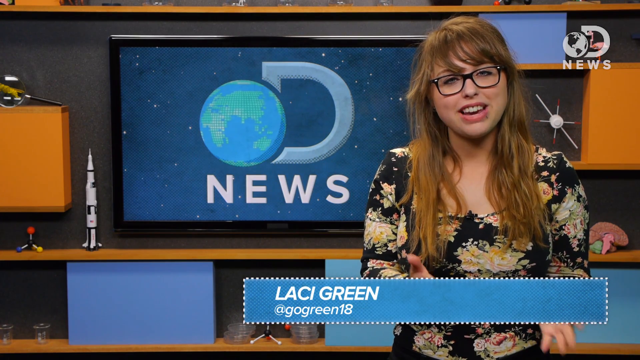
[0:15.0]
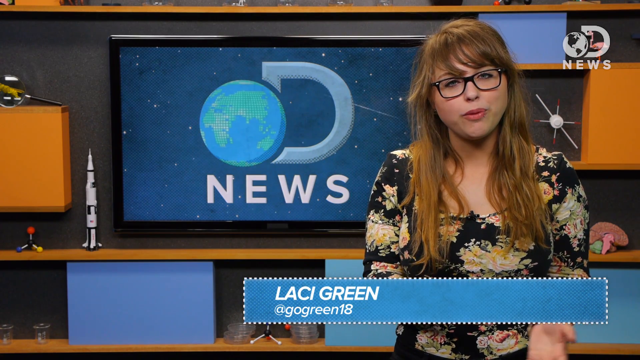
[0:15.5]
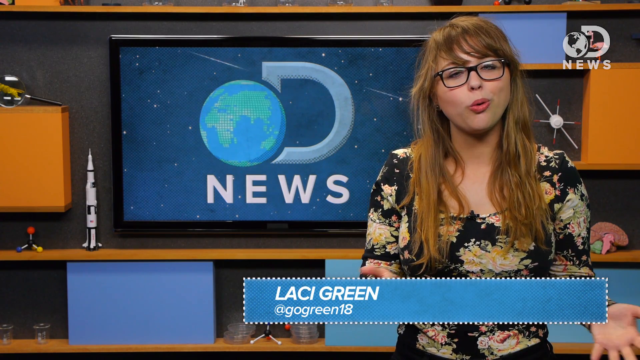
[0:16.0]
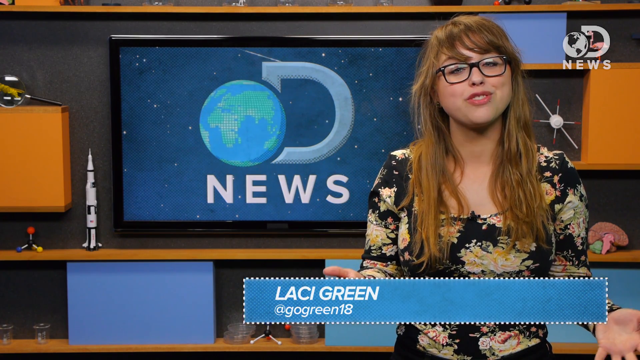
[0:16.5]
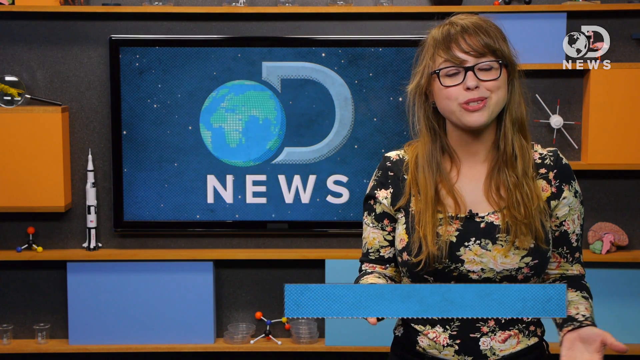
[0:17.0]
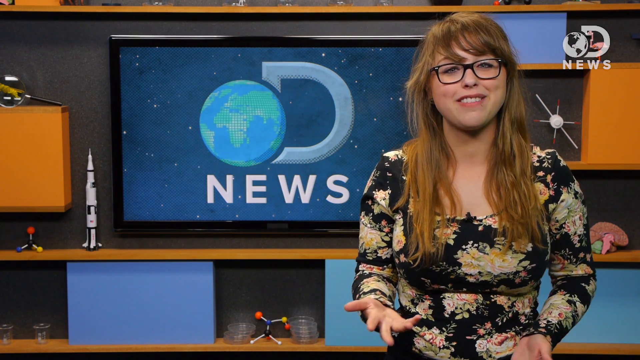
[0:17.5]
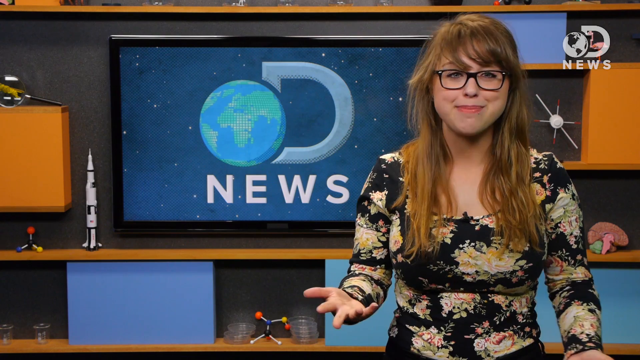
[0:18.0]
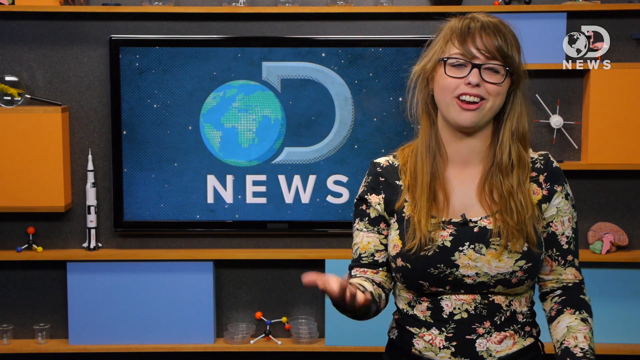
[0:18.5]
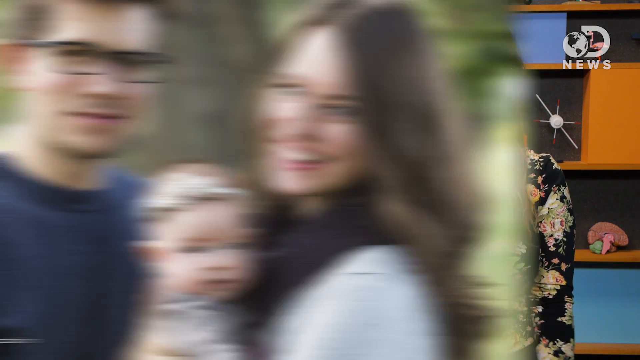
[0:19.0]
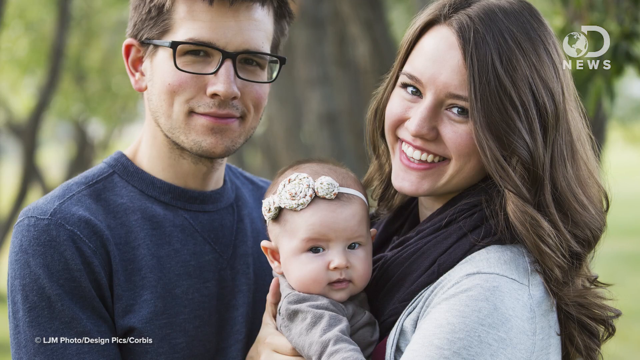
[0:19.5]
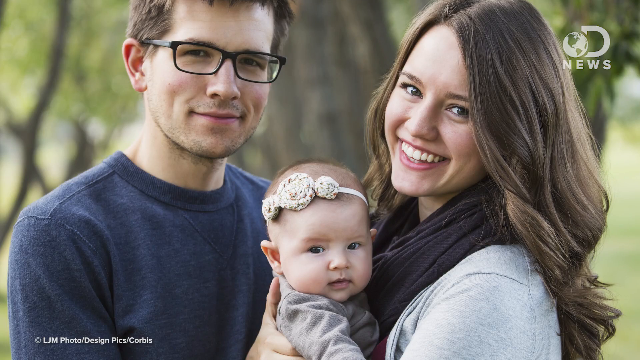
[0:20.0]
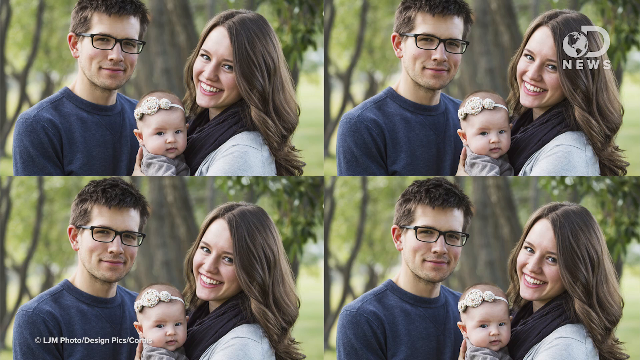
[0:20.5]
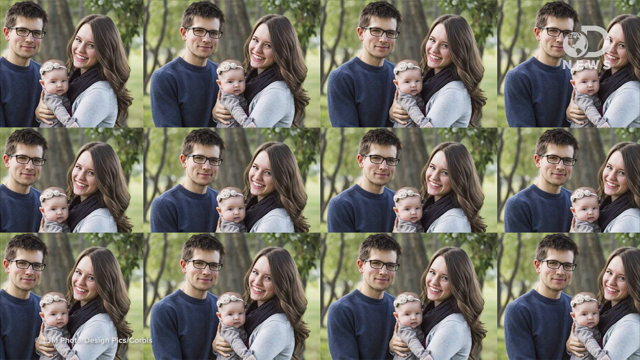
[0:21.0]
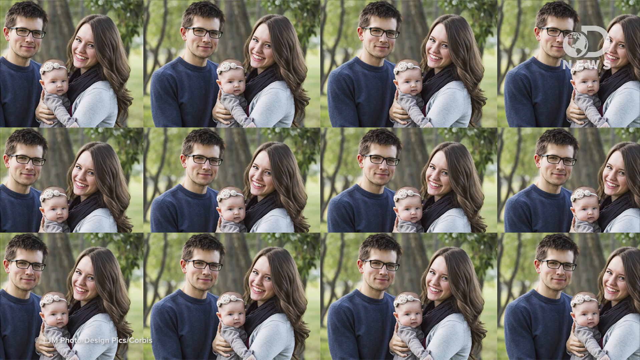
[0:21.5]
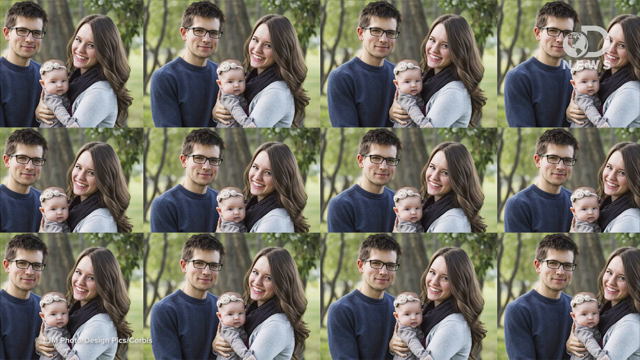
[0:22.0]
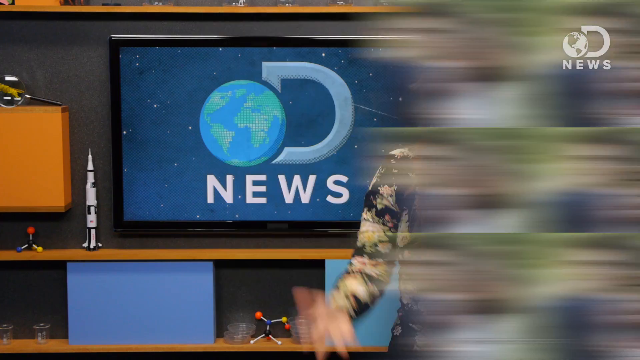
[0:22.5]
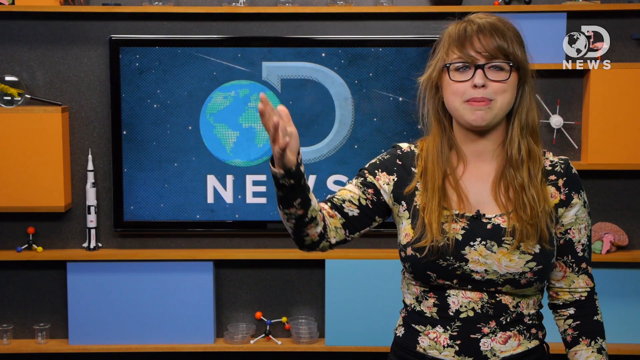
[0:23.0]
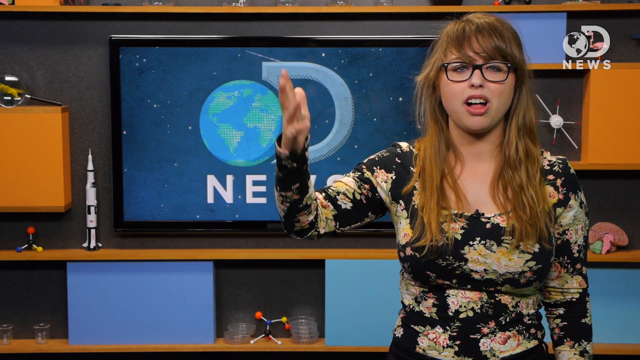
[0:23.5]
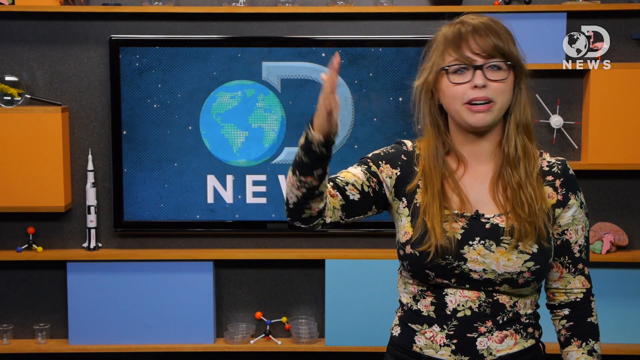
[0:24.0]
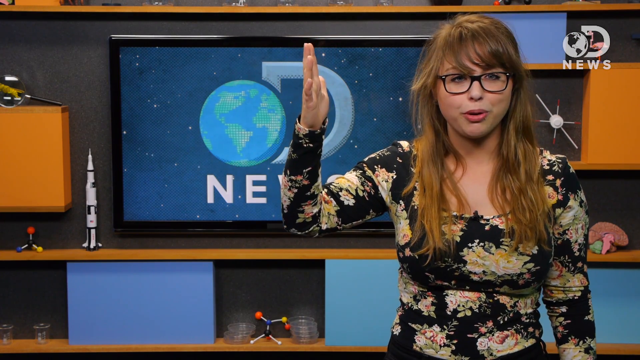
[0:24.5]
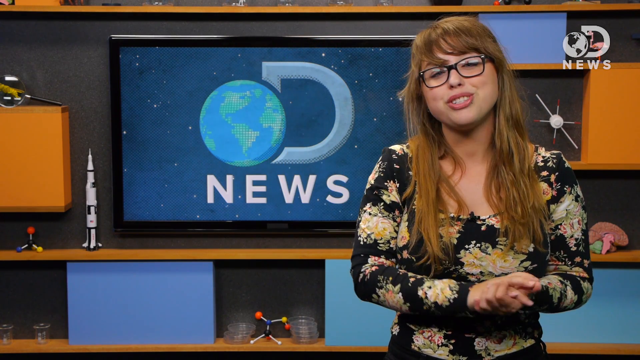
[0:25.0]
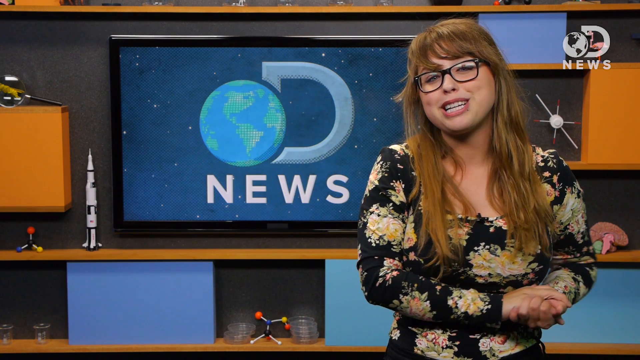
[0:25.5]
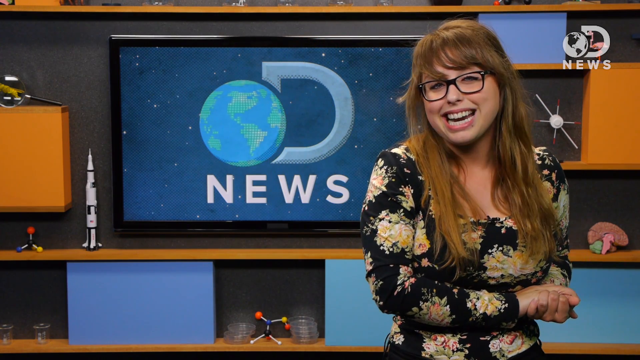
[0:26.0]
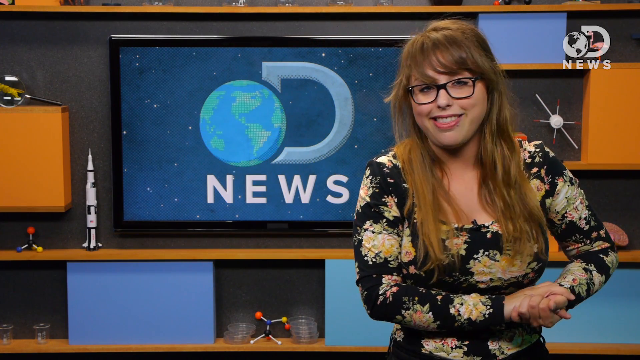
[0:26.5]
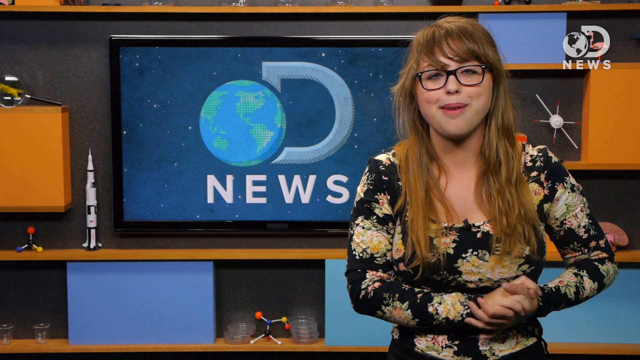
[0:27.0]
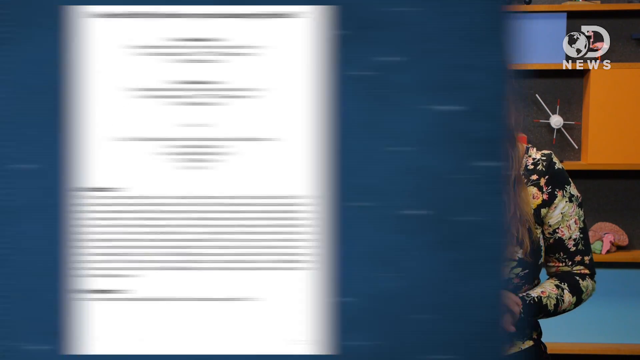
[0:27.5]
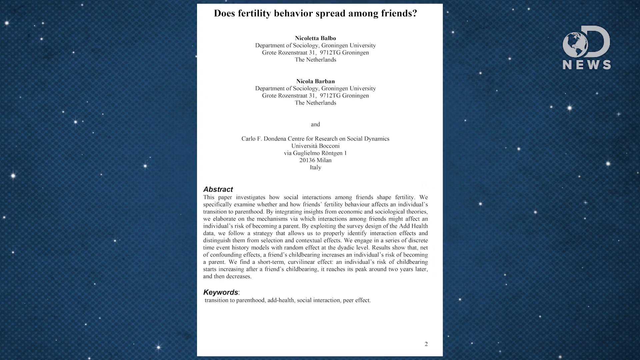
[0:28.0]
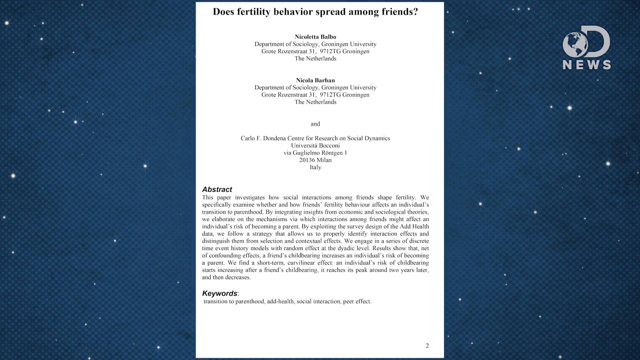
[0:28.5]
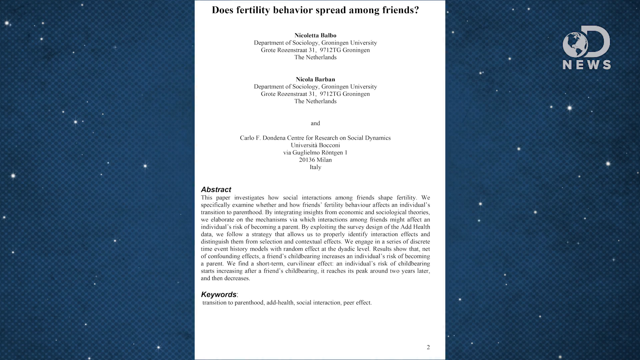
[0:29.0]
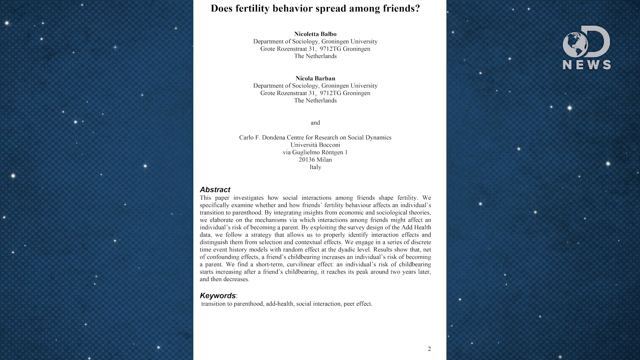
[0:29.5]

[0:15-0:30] The same woman appears: she has a white skin tone, long brown, orangish hair and black glasses. Her name, "Lacey Green" with the @ symbol and "go green 18", is at the bottom of the image, and the same D news television with the earth is behind her. She appears to be talking to the screen. The video then changes to what appears to be a family: a woman on the right, a man on the left, and a baby in the middle, held by the woman. All three have a white skin tone. The woman has very long brown hair and wears a gray long-sleeve top and a black scarf. The baby wears a gray long-sleeve top and what appears to be a flower headband. The man wears a blue long-sleeve top and black glasses and has short brown hair. Next, in a picture-grid format, the same family image multiplies from one image to four, then from four to what appears to be twelve. The video returns to the woman in her black dress with white flowers, talking to the camera. Then what appears to be a paper is shown, with "does fertility behavior spread among friends?" at the top and a lot of information about it below.